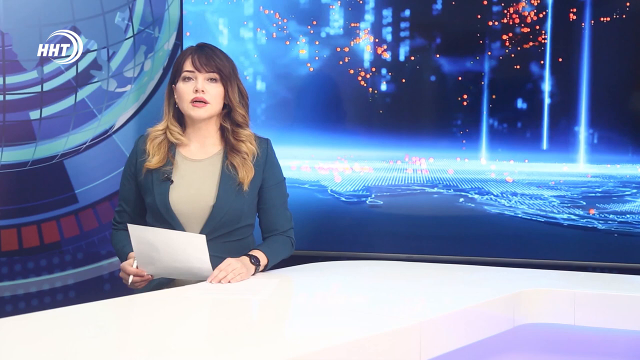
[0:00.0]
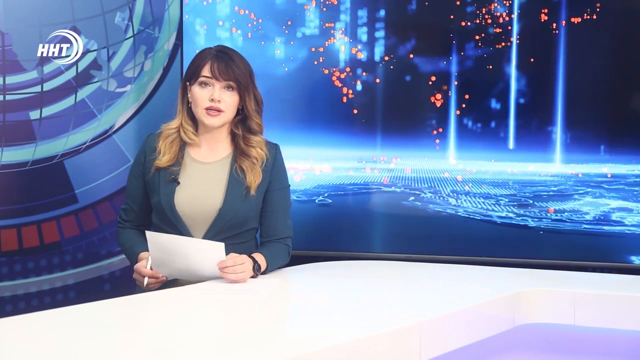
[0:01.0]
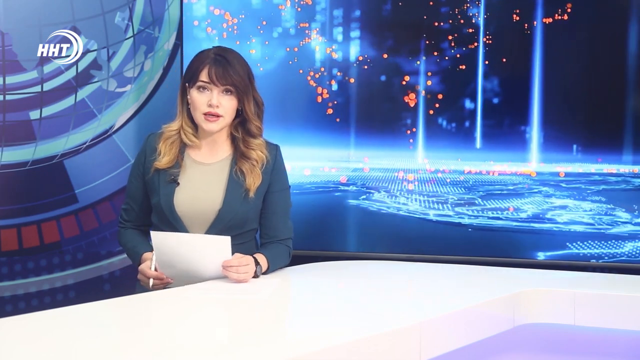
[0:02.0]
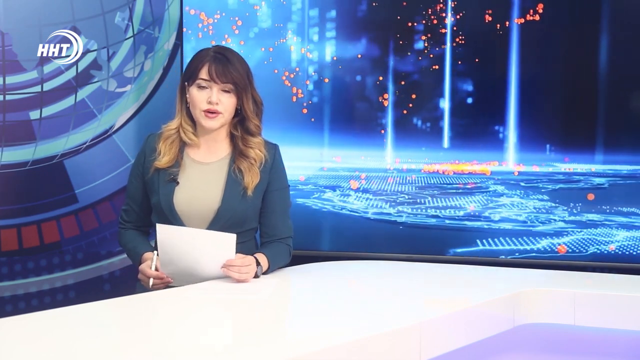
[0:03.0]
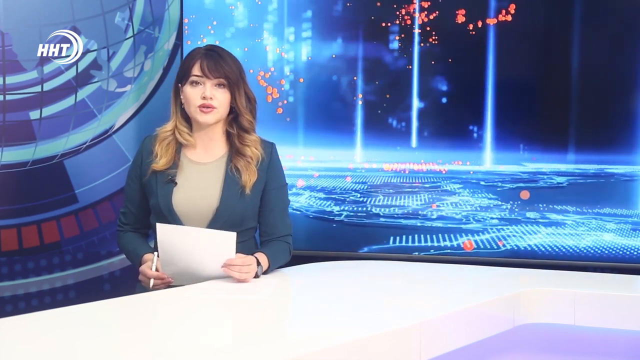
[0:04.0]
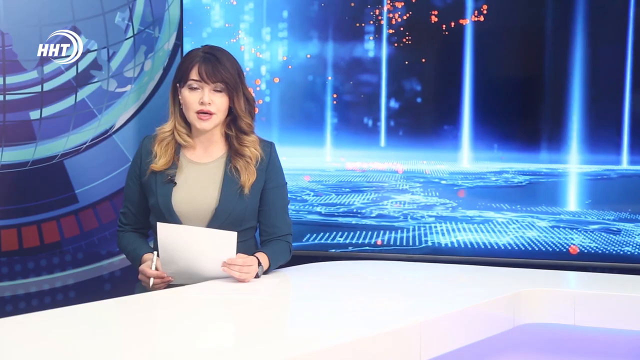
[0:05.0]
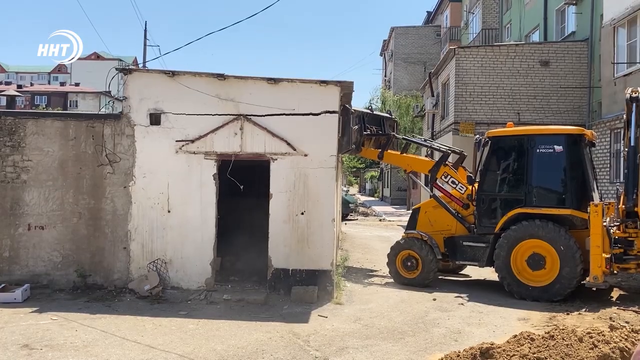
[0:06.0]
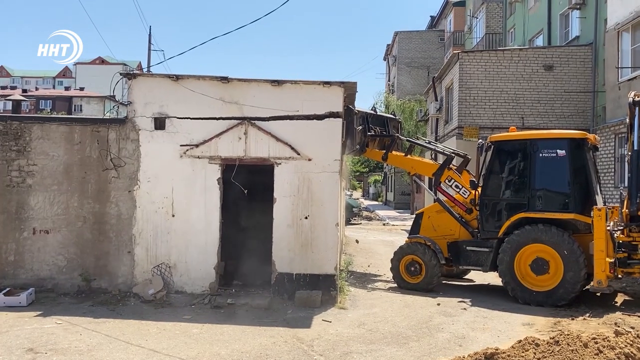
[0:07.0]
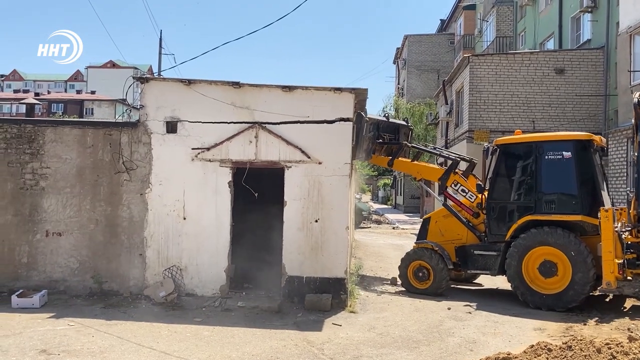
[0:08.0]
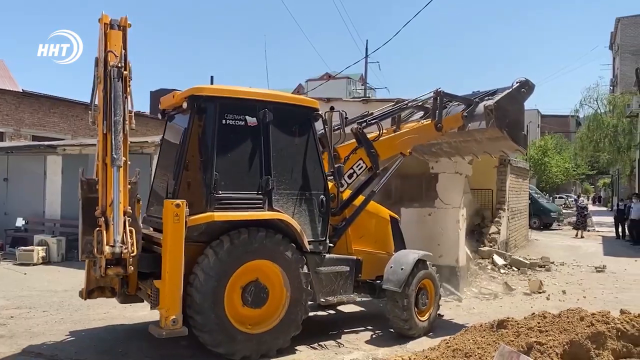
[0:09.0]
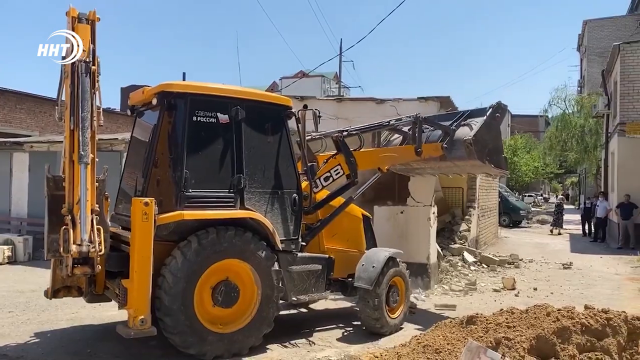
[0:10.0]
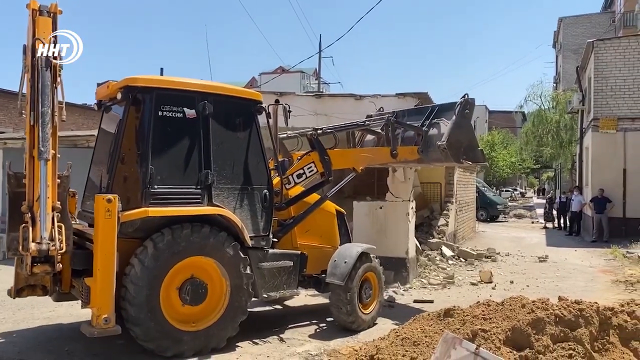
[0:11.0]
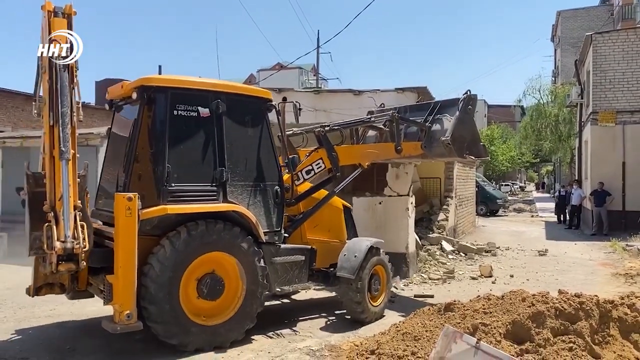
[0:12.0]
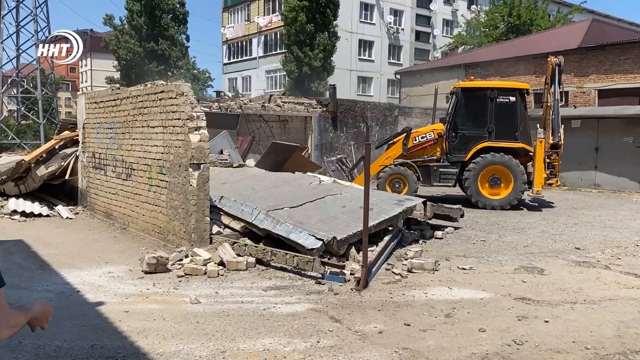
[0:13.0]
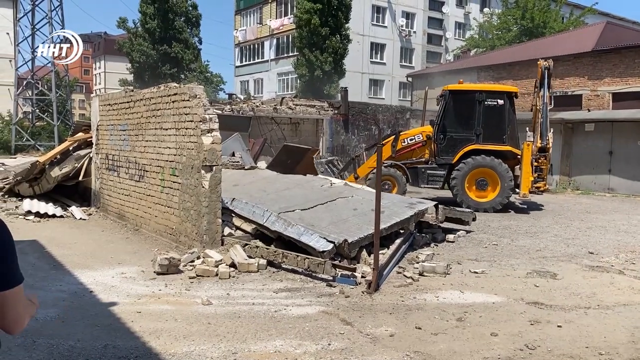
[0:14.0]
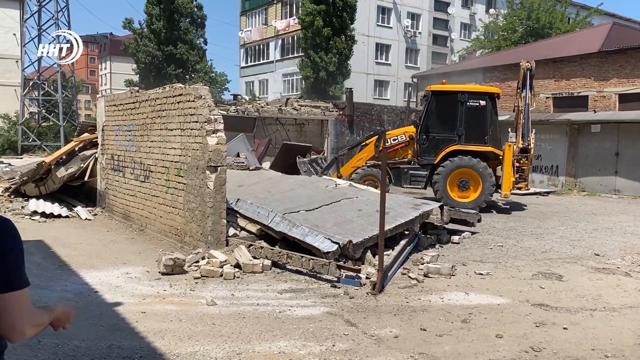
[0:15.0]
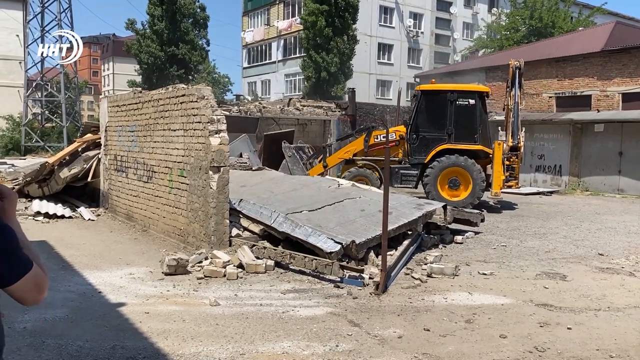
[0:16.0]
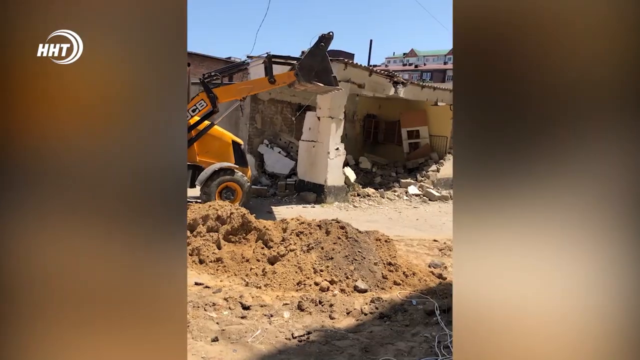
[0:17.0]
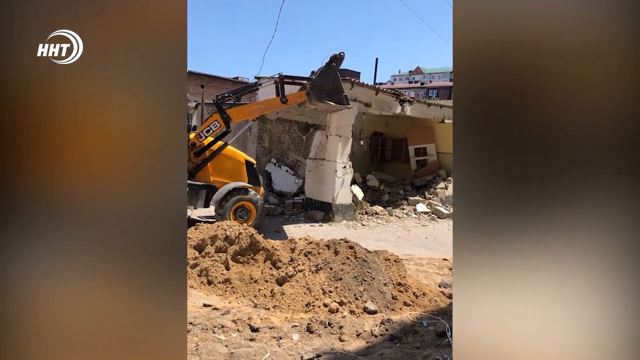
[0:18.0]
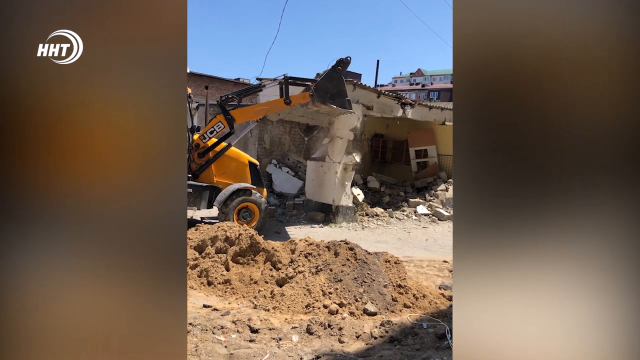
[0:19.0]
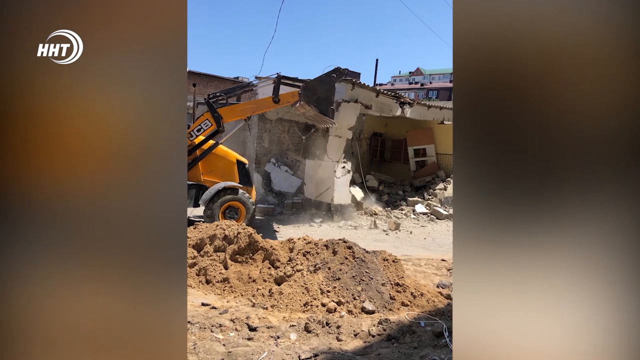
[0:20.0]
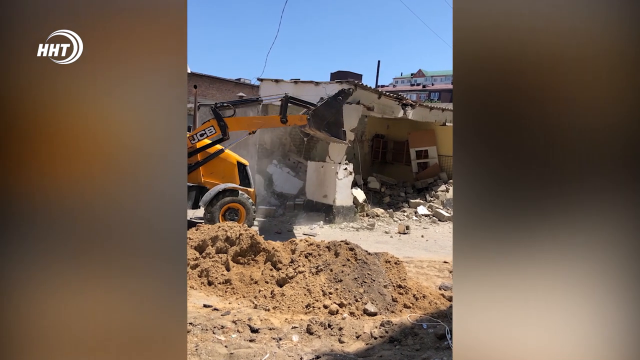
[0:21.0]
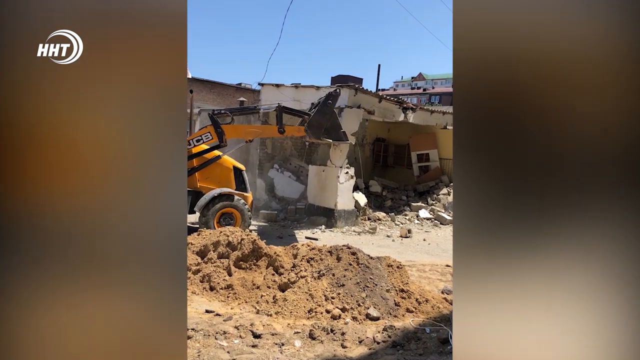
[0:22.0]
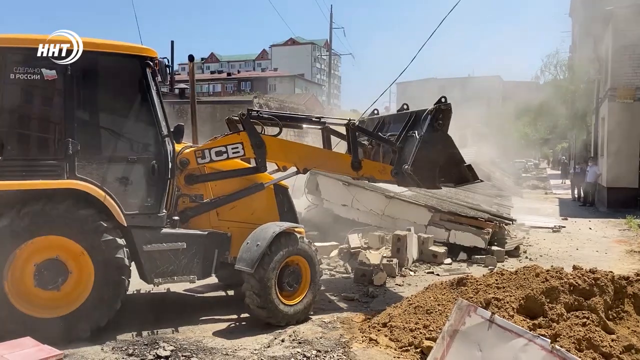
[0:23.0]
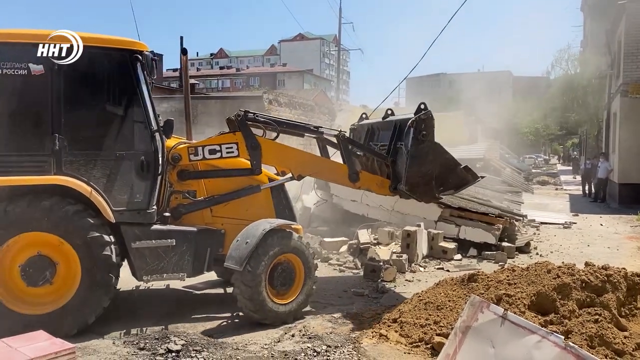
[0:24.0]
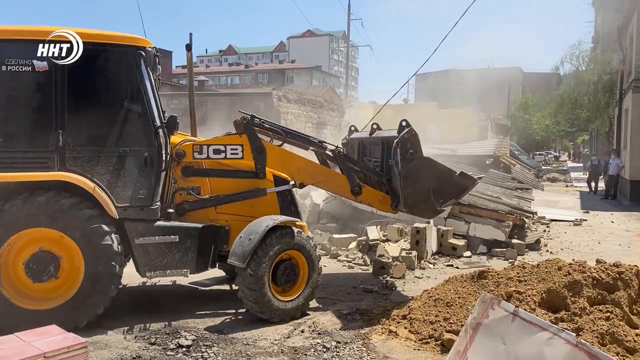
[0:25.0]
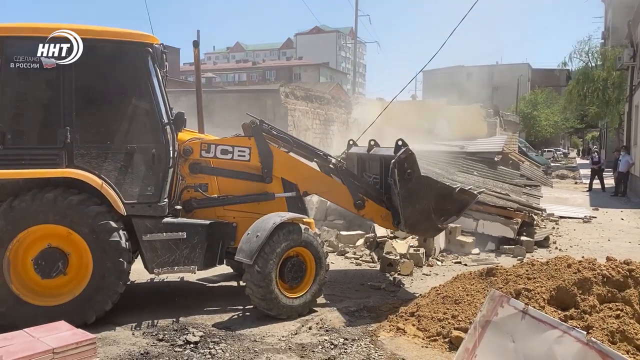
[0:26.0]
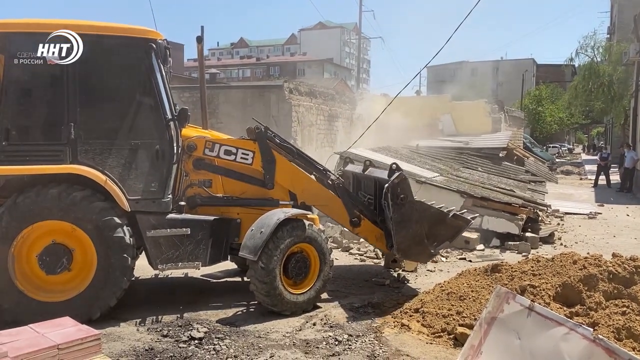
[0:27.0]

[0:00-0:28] An angry woman news reporter is behind a desk on what looks like a daily news program, reporting on what appears to be a demolition. A fairly large bobcat, which looks like it is orange, yellow and black, demolishes a structure that looks like it is made of cement, breaking the pieces down into rubble. It backs up and then goes forward to pick up the rubble and break more of the structure. The bobcat has "JCB" on its side, apparently the brand name. The area looks urban. Several men are standing along the side, watching as the building is demolished. The roof has caved in and the structure is pretty much flattened, seemingly ready for the debris to be hauled away.